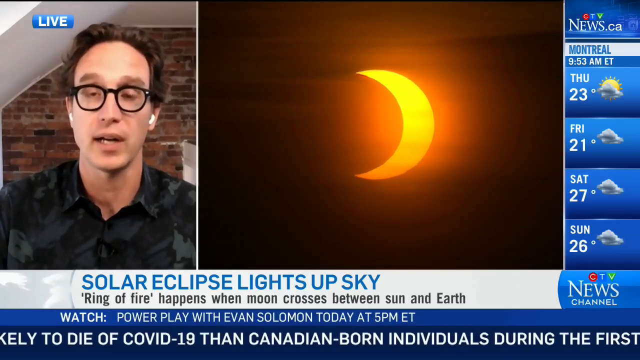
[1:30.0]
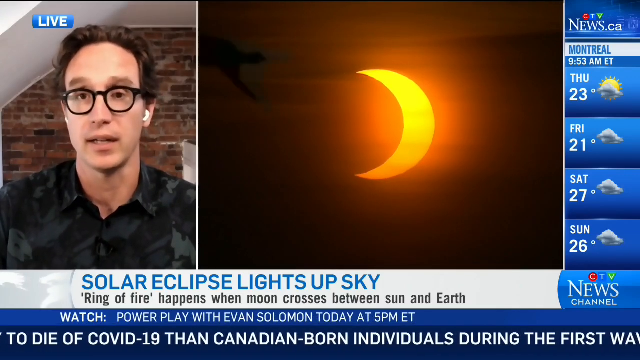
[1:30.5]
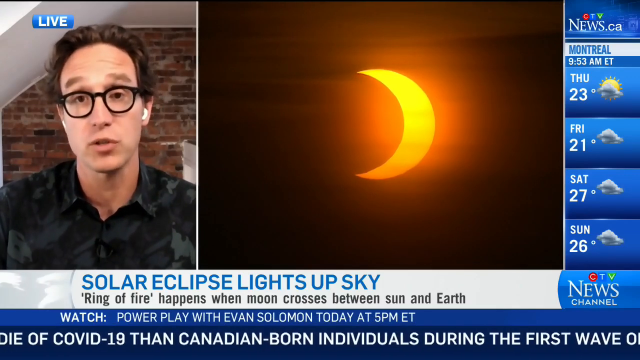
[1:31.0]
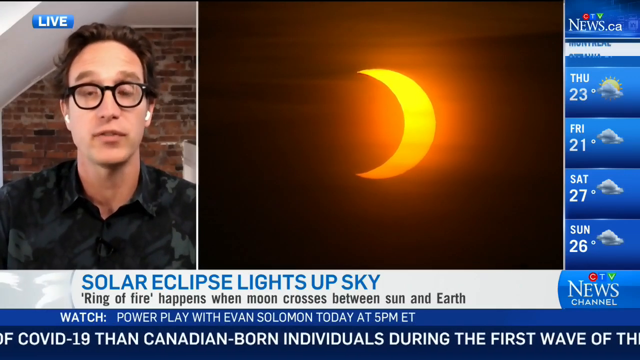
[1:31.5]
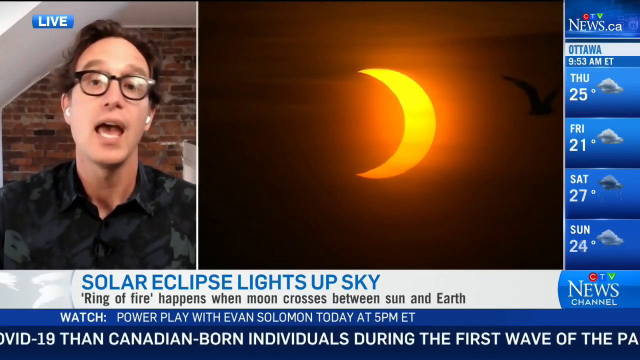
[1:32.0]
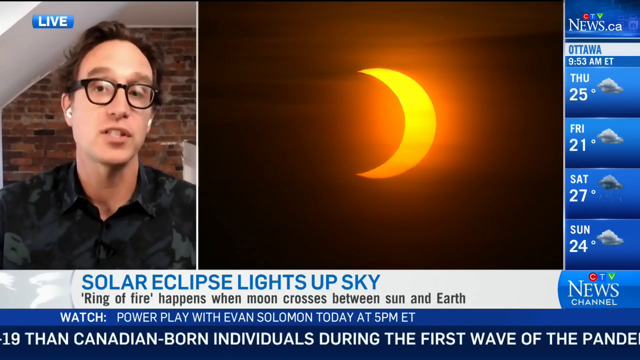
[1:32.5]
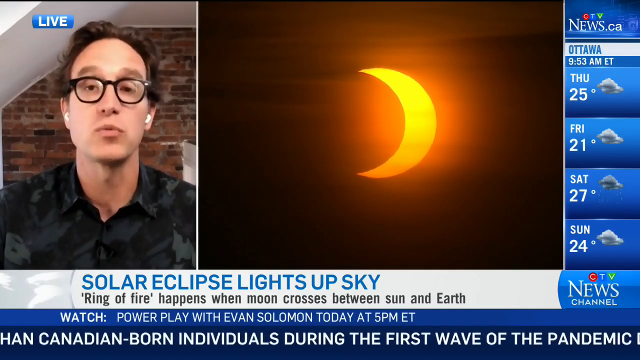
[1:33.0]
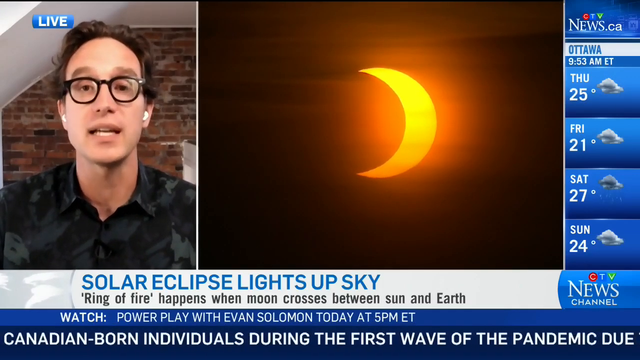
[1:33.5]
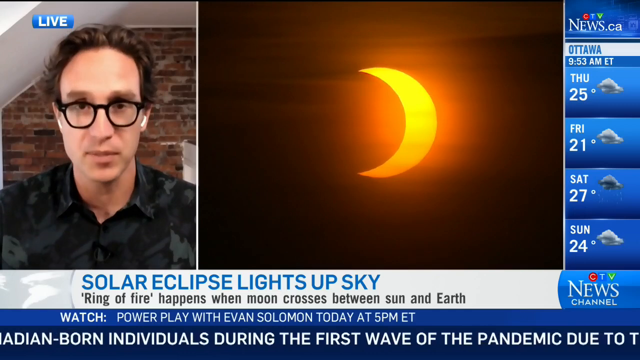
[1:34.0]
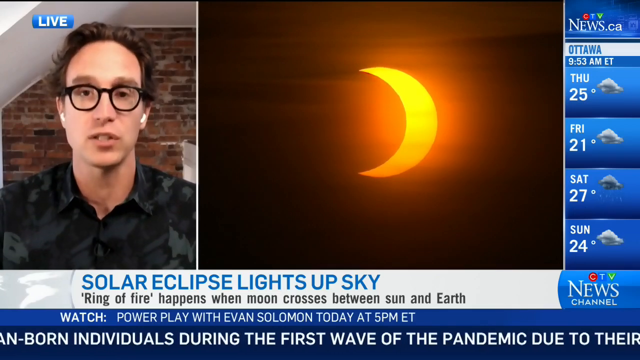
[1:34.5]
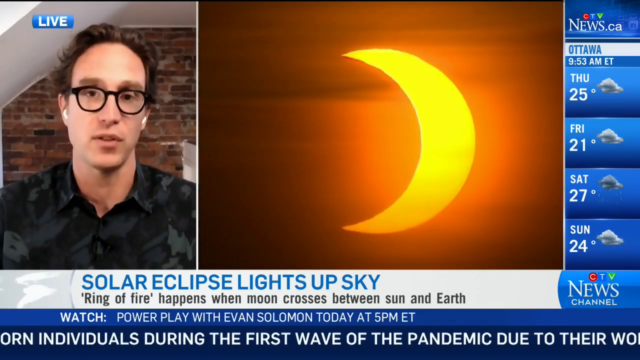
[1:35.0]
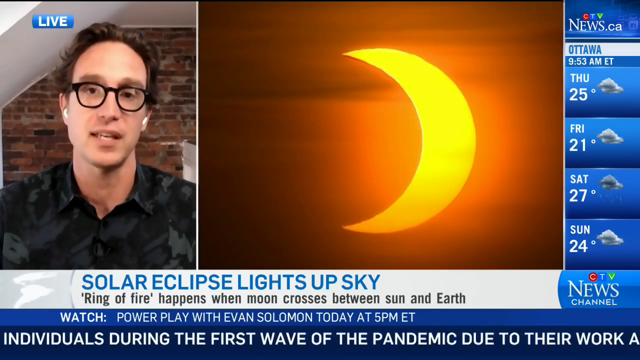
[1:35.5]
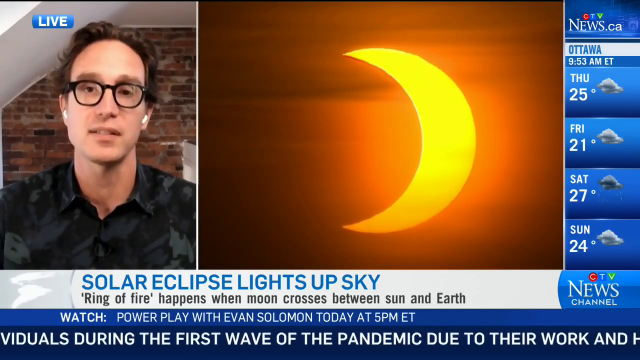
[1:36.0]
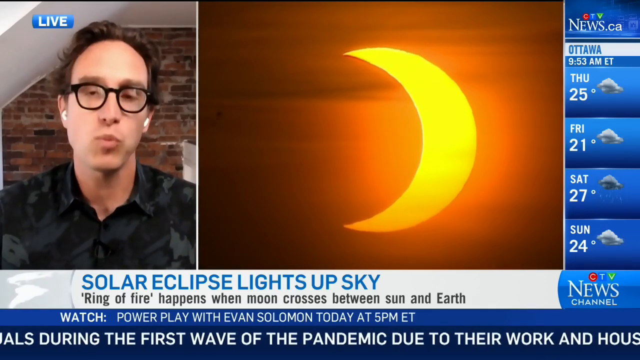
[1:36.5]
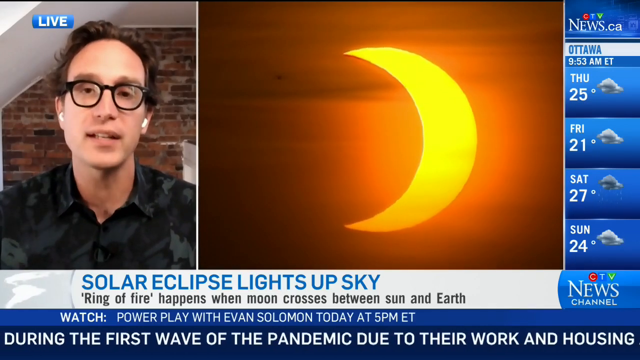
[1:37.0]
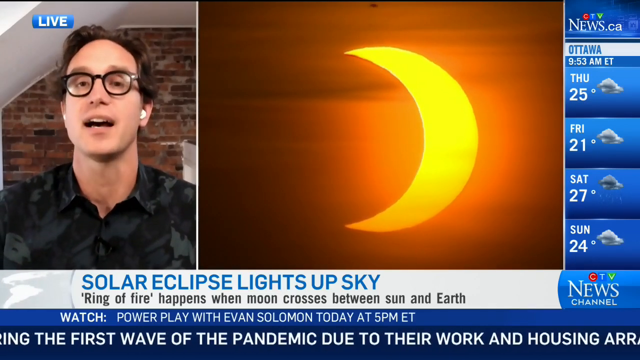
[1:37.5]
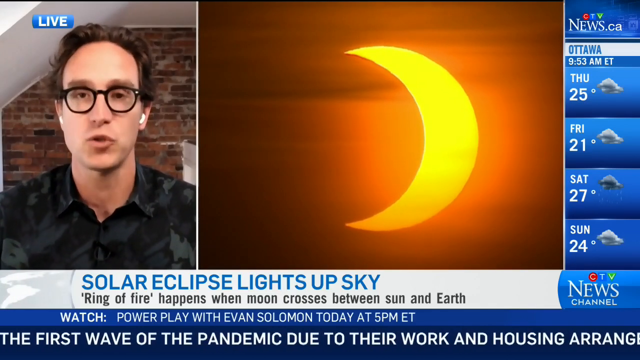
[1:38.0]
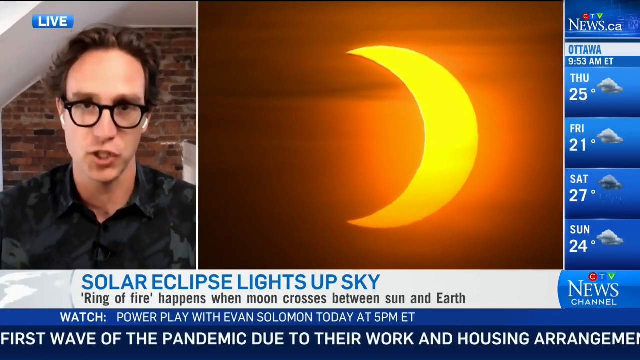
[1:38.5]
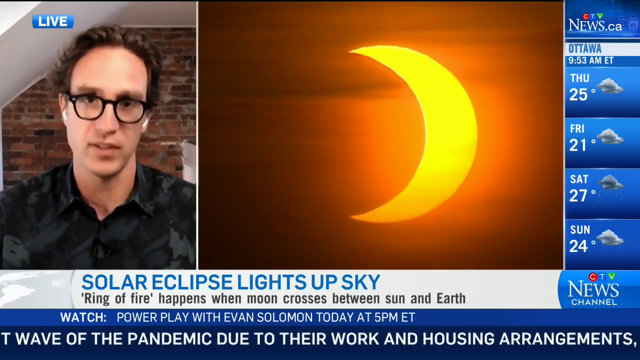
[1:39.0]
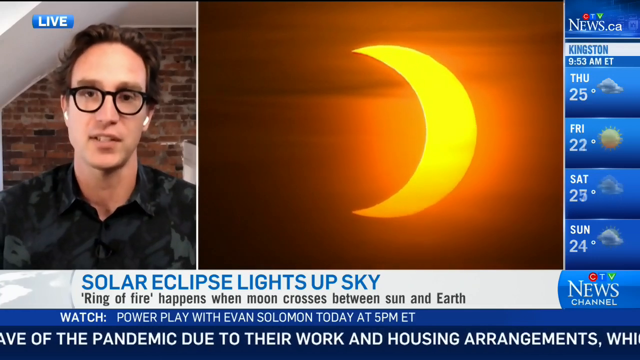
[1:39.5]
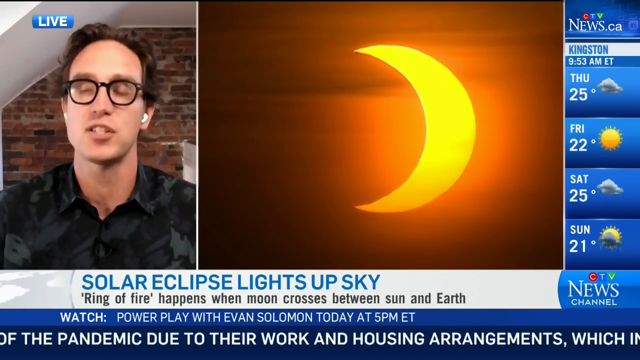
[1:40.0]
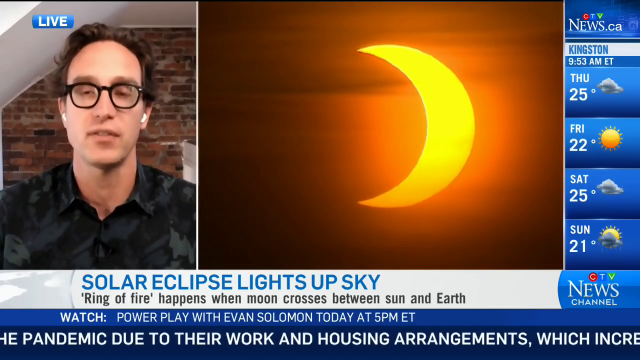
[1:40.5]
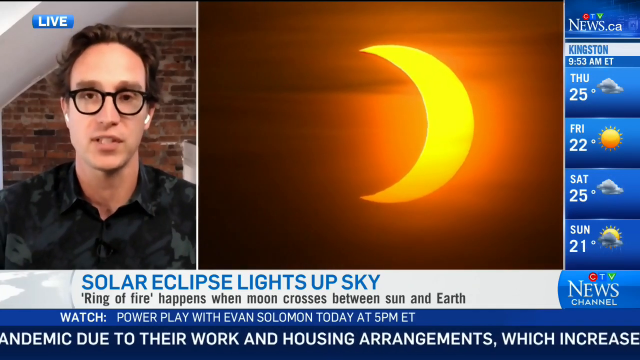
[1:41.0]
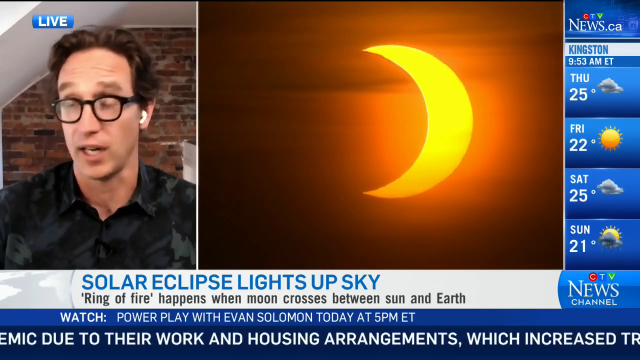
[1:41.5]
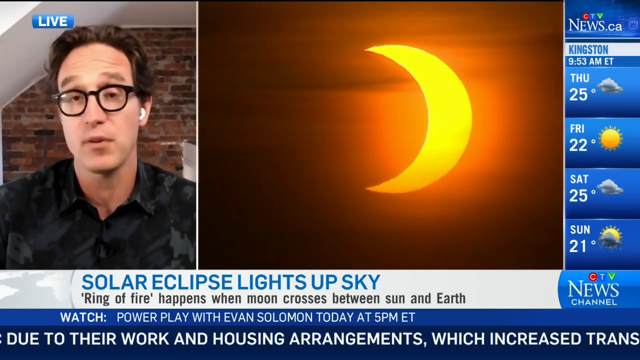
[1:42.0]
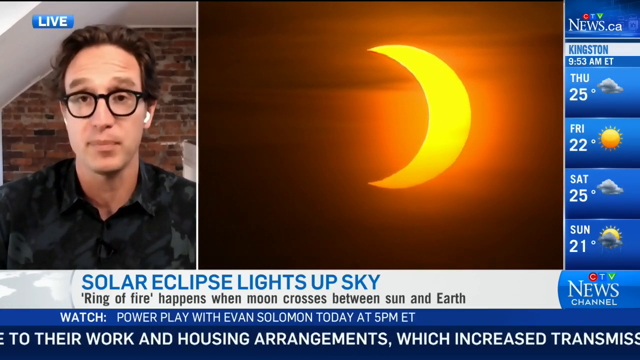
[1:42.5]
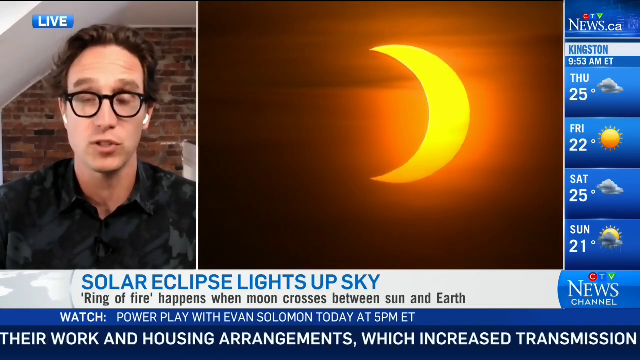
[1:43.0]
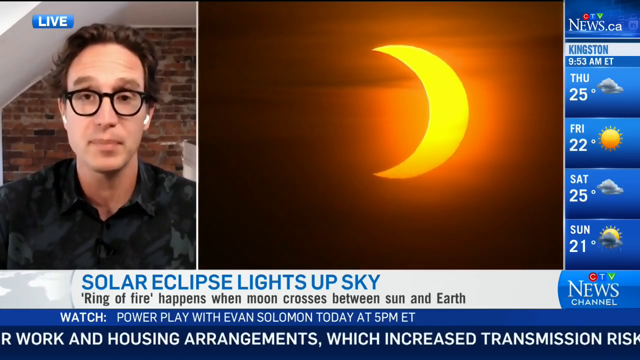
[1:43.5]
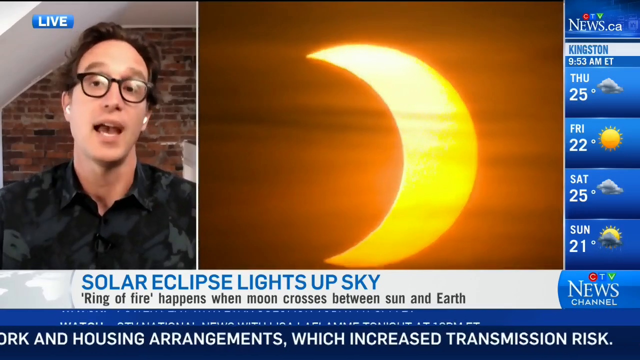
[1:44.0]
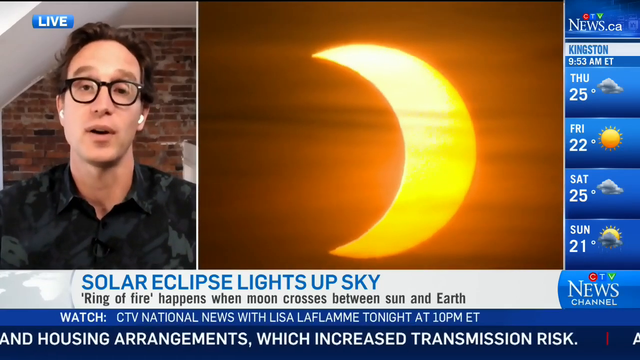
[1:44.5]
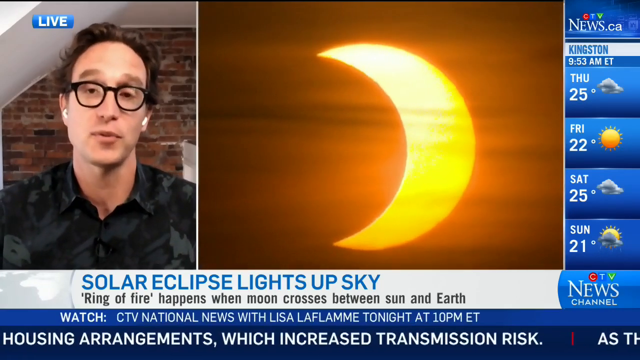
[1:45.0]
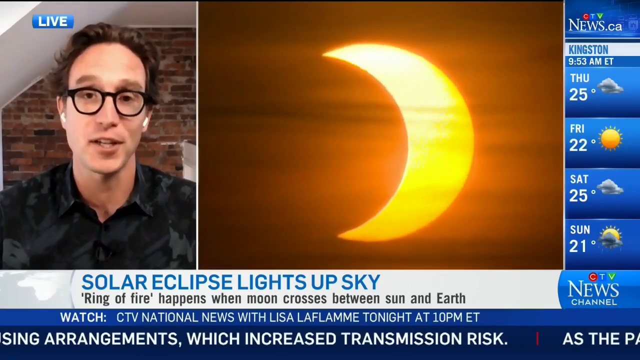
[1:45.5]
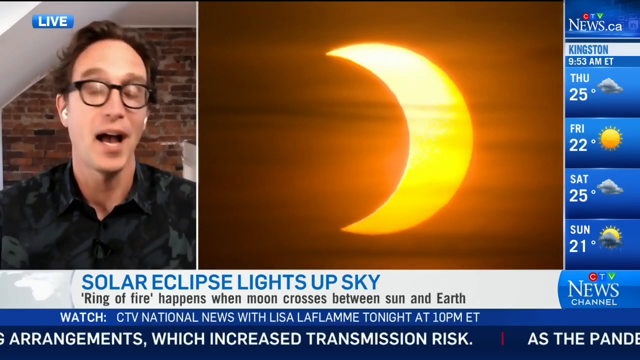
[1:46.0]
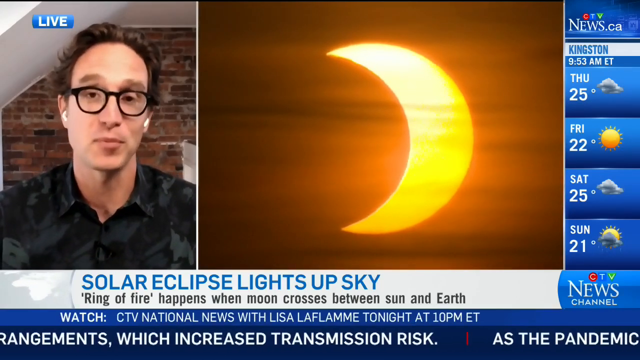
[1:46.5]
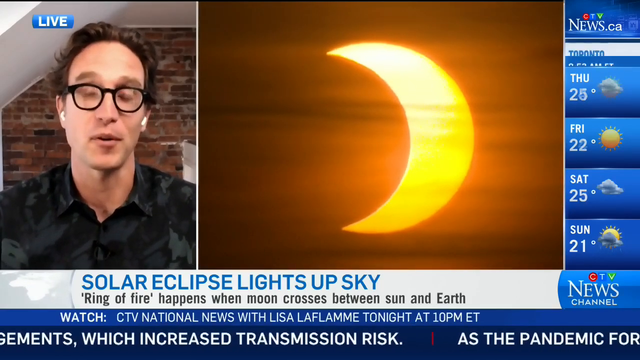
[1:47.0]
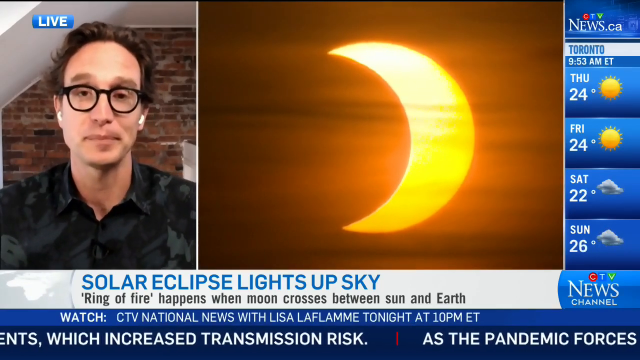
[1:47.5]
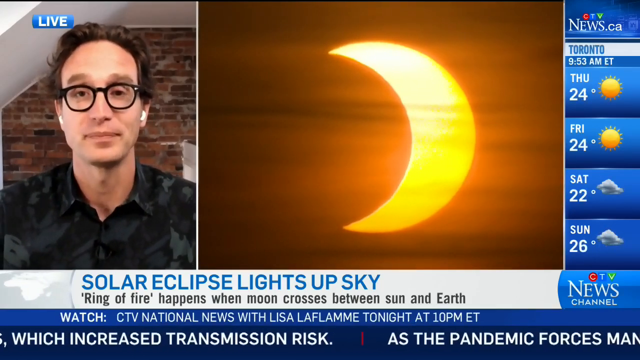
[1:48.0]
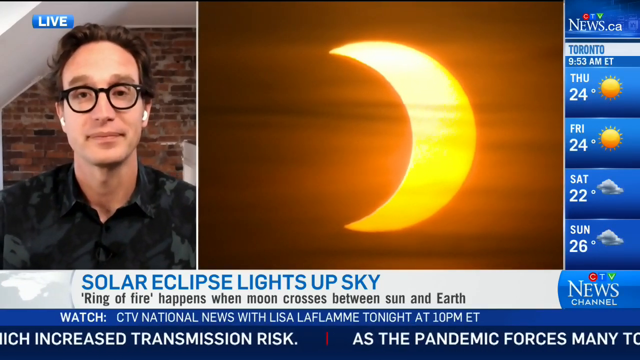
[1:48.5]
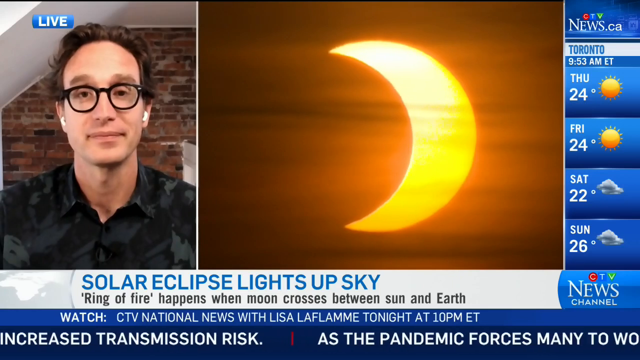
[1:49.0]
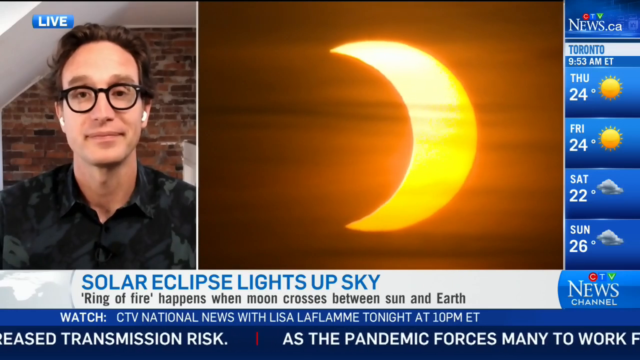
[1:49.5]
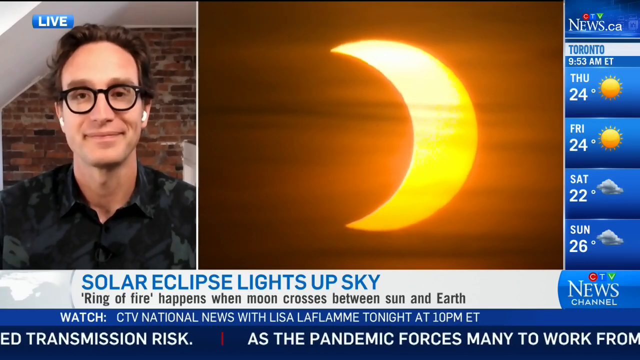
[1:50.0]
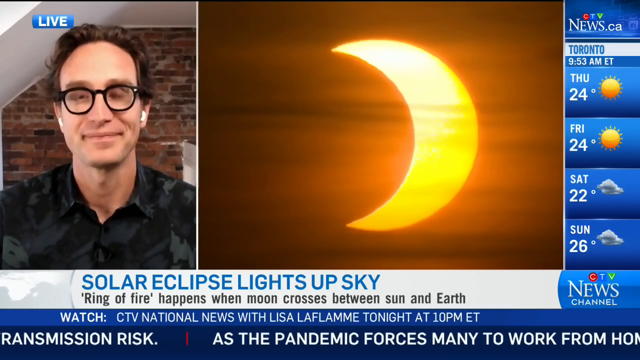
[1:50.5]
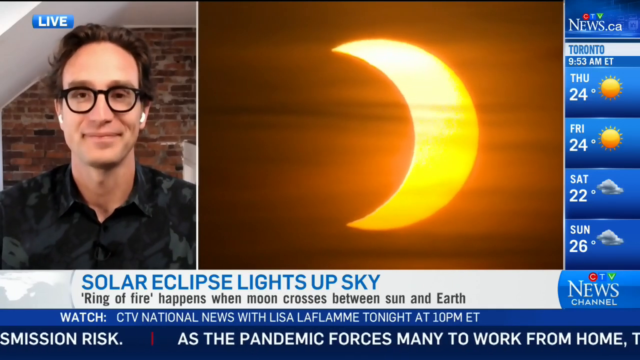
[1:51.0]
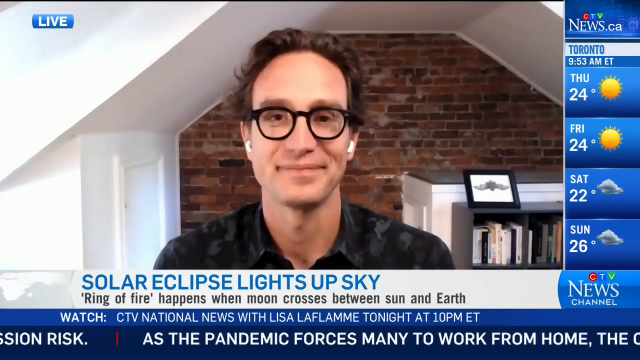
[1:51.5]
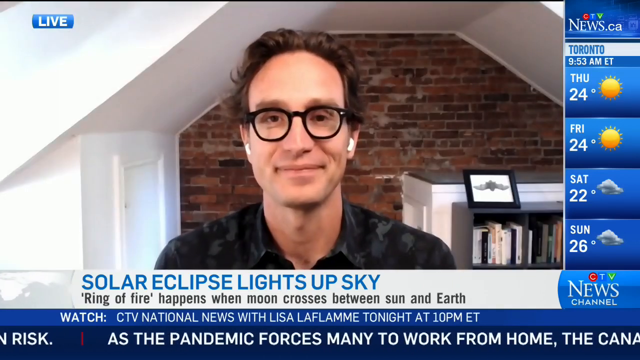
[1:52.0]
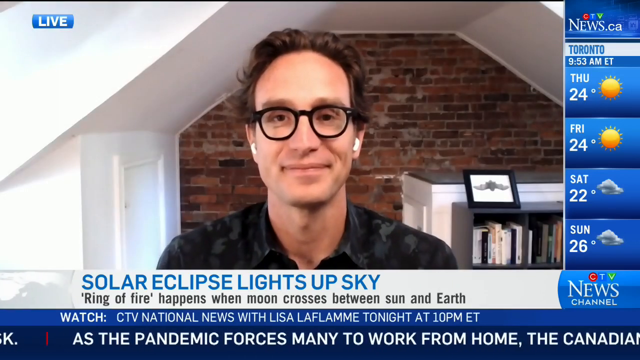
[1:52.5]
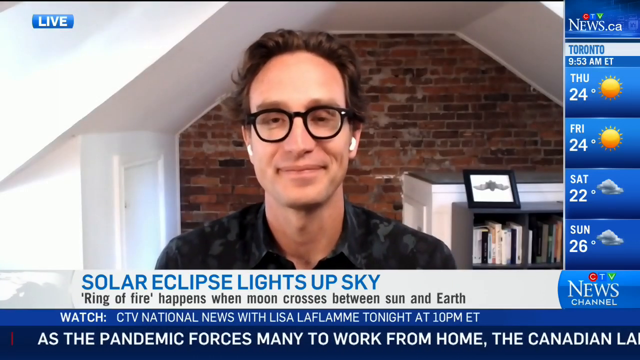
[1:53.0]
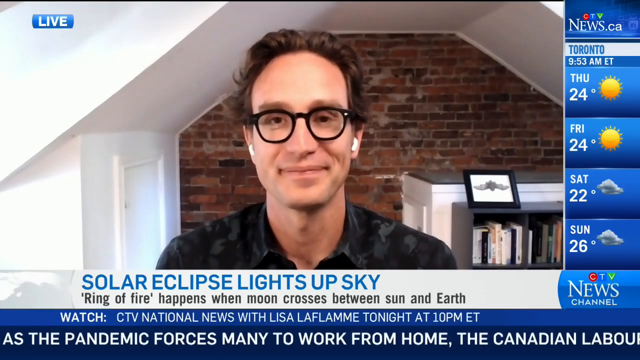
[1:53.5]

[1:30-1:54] The man is shown while another video shows the solar eclipse lighting up the sky; the eclipse becomes lighter than before and is zoomed in on the screen. As he presents the news, birds keep passing in front of the eclipse in the sky. The weather listing for Ottawa at 9:53 am shows Thursday 25 degrees with clouds, Friday 21 degrees with clouds, Saturday 27 degrees with clouds and Sunday 24 degrees with clouds. Kingston at 9:53 am shows Thursday 25 degrees with clouds, Friday 22 degrees with sun, Saturday 25 degrees with clouds and Sunday 21 degrees with sun and clouds.